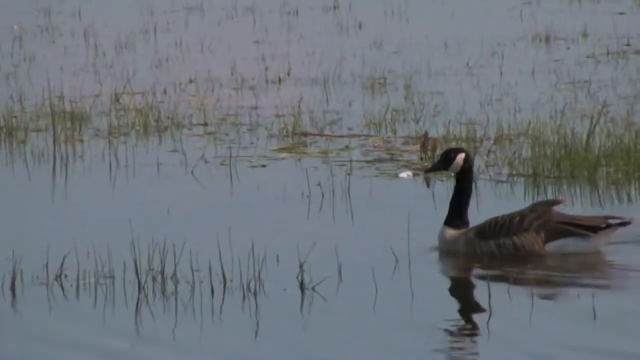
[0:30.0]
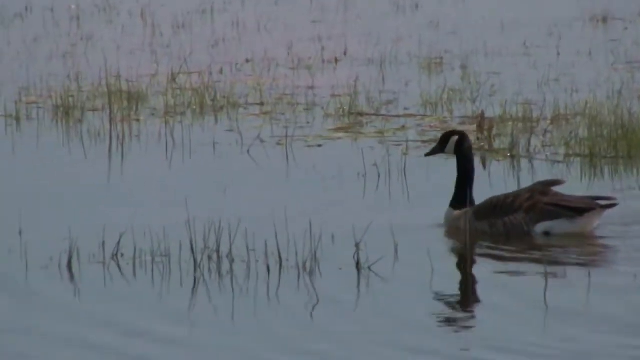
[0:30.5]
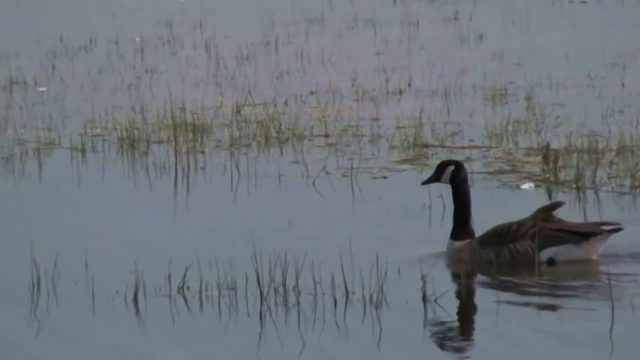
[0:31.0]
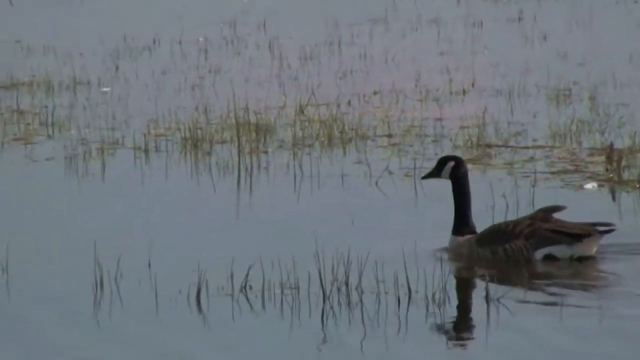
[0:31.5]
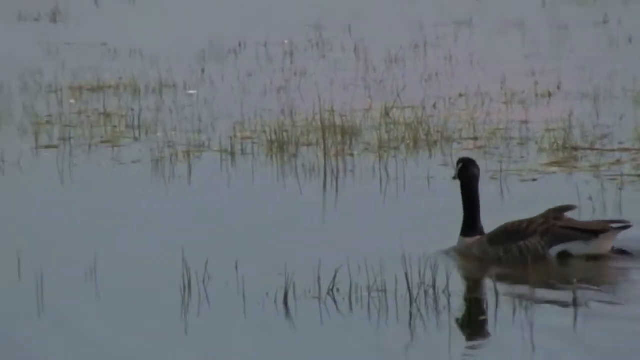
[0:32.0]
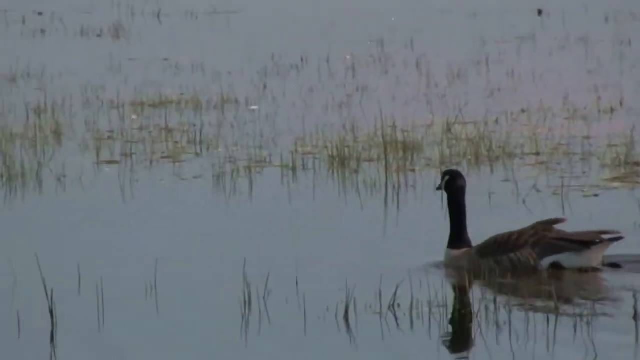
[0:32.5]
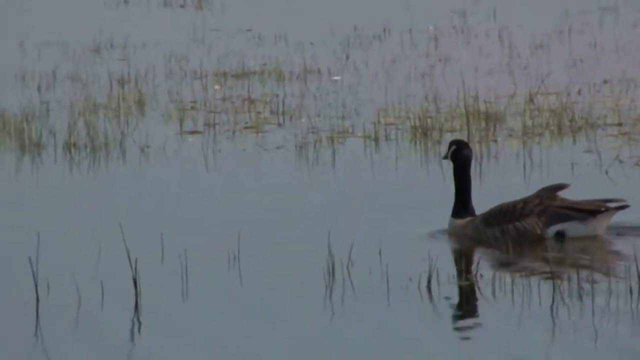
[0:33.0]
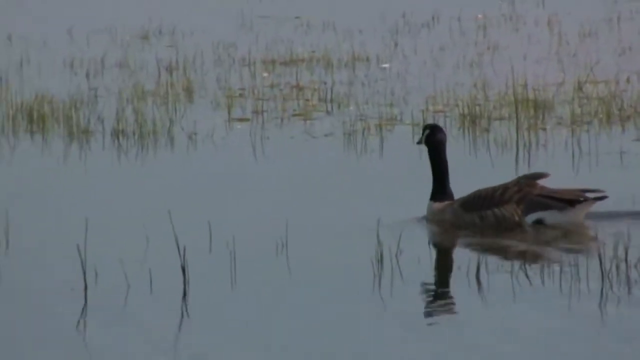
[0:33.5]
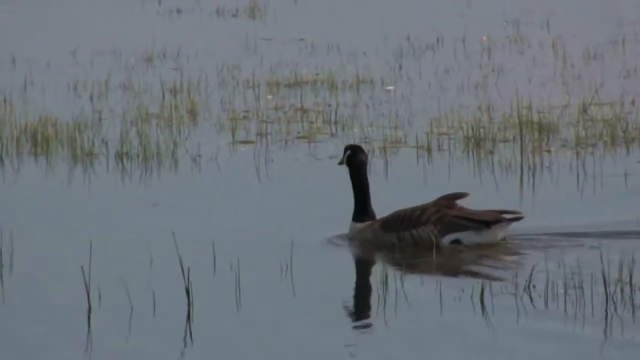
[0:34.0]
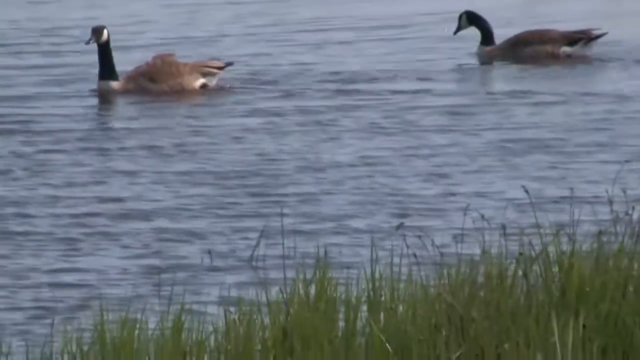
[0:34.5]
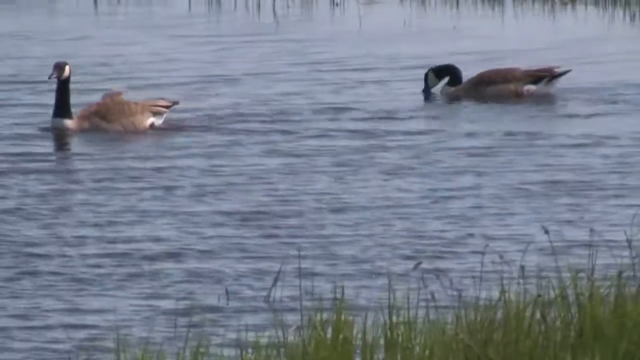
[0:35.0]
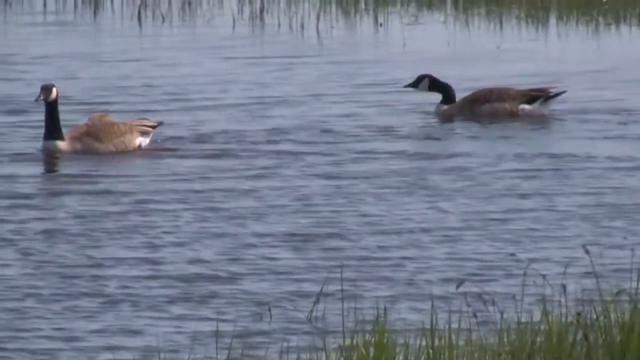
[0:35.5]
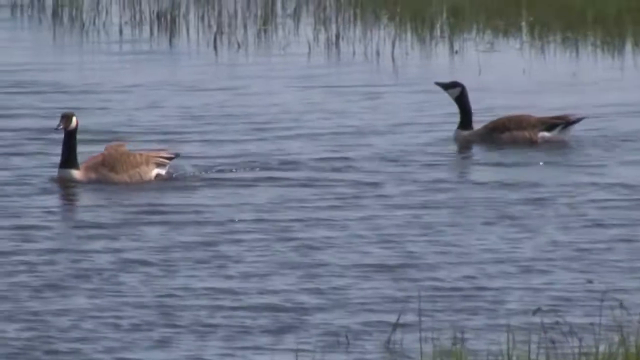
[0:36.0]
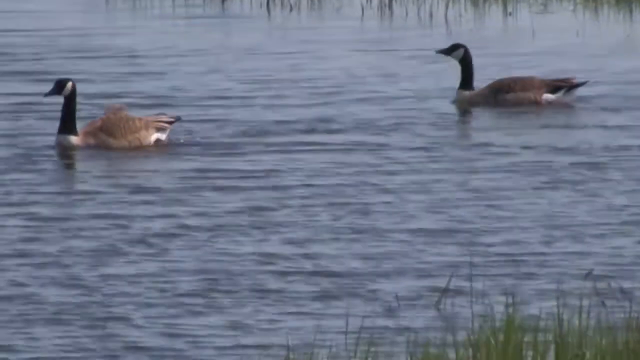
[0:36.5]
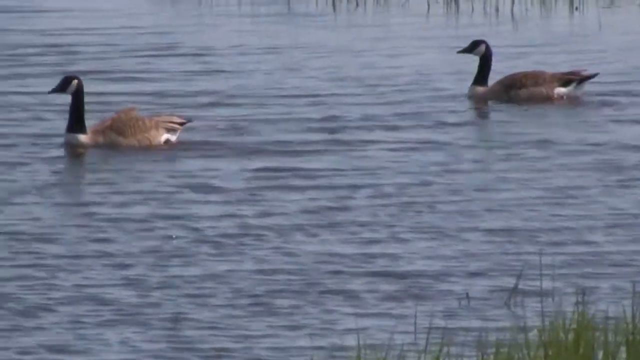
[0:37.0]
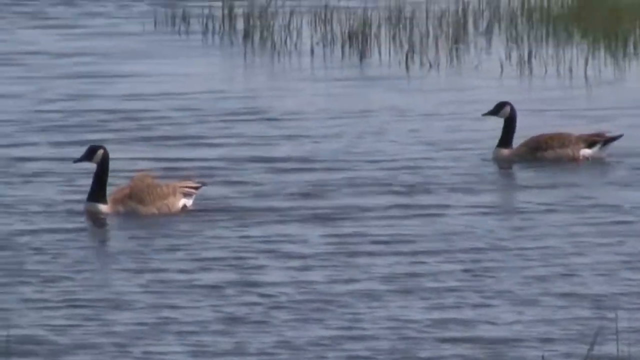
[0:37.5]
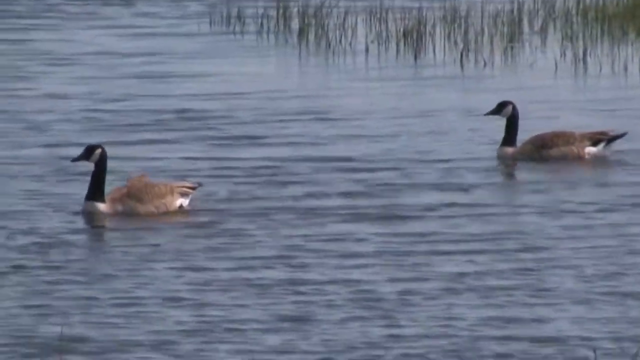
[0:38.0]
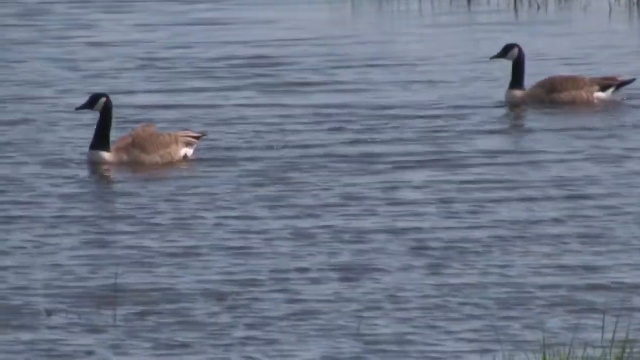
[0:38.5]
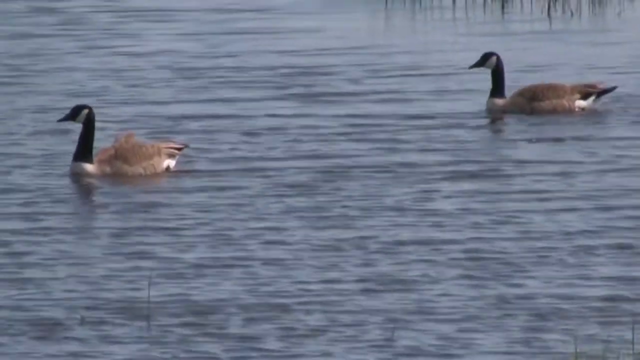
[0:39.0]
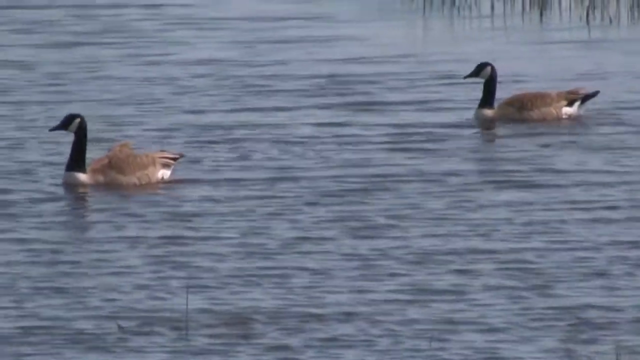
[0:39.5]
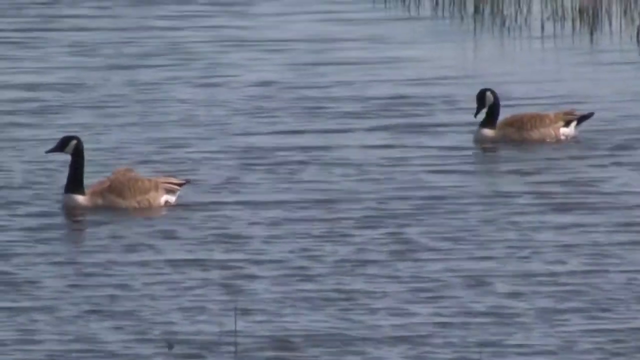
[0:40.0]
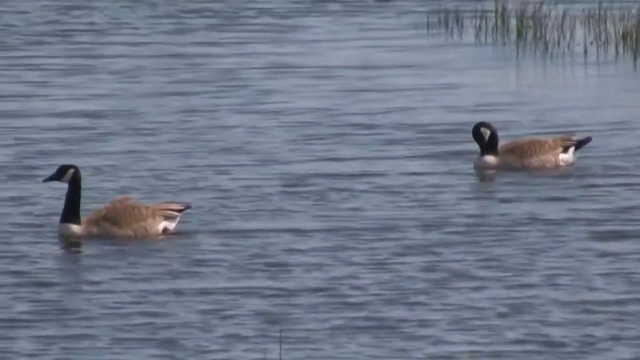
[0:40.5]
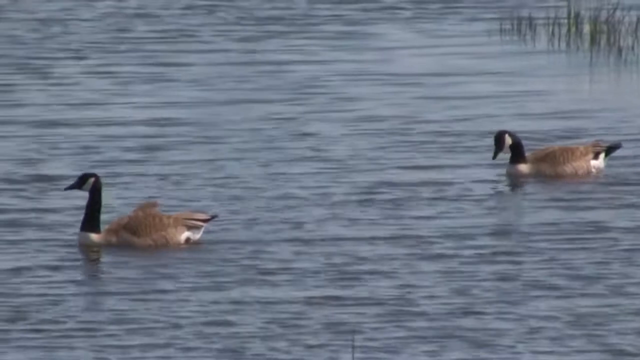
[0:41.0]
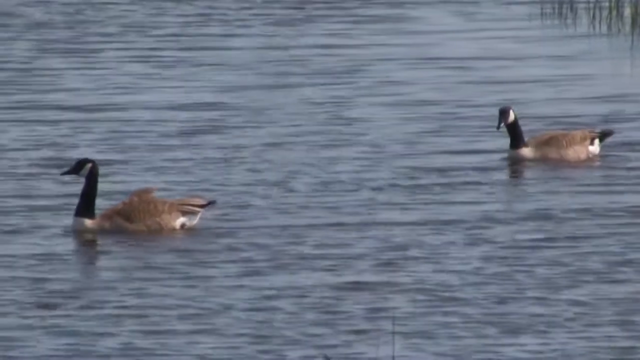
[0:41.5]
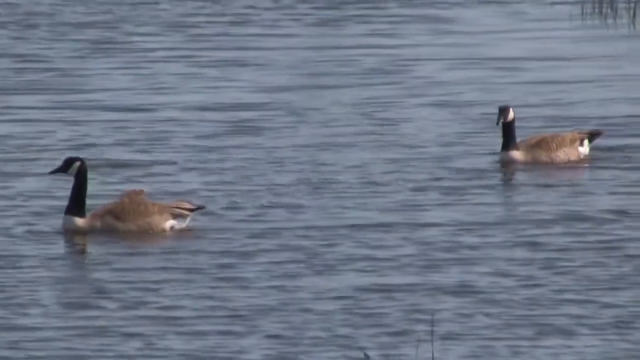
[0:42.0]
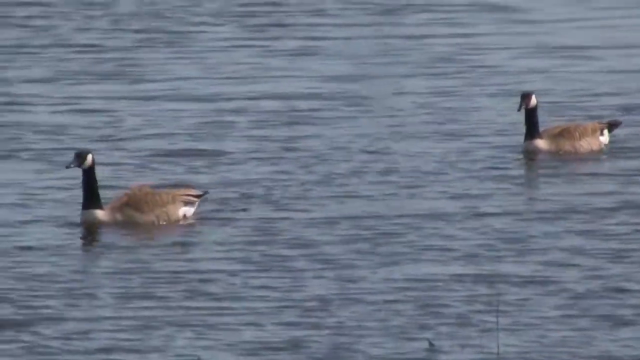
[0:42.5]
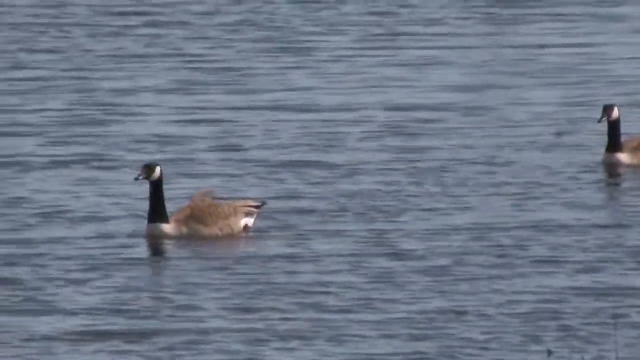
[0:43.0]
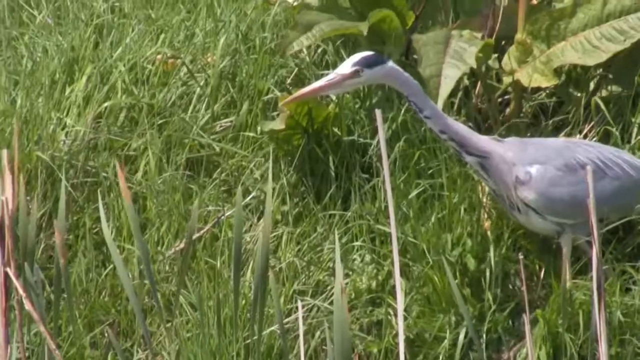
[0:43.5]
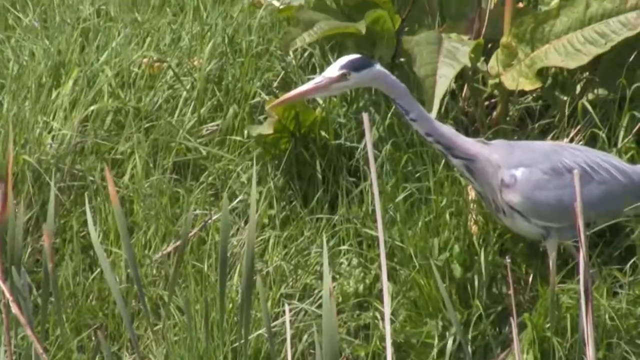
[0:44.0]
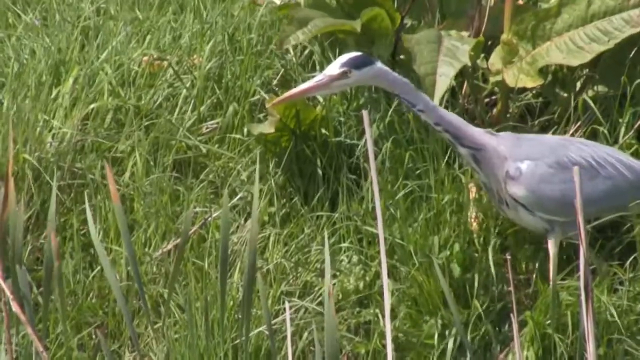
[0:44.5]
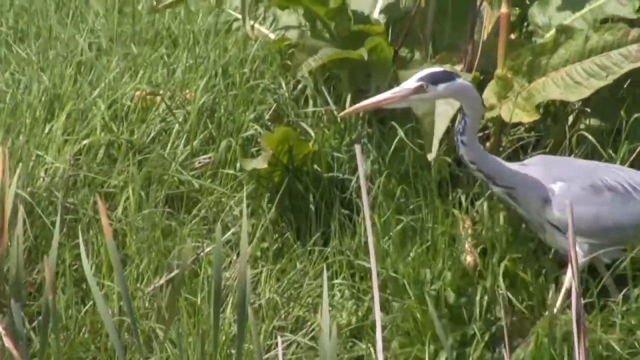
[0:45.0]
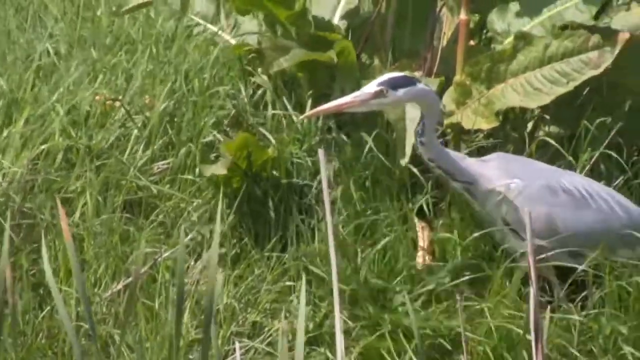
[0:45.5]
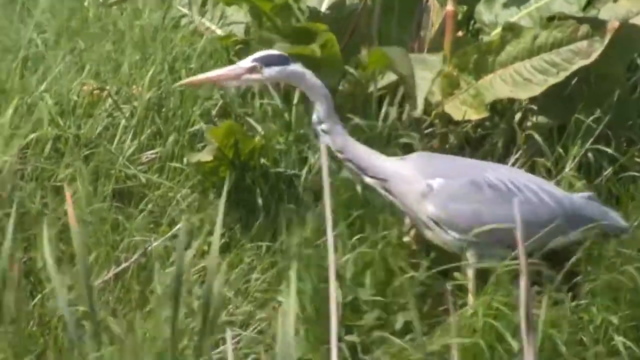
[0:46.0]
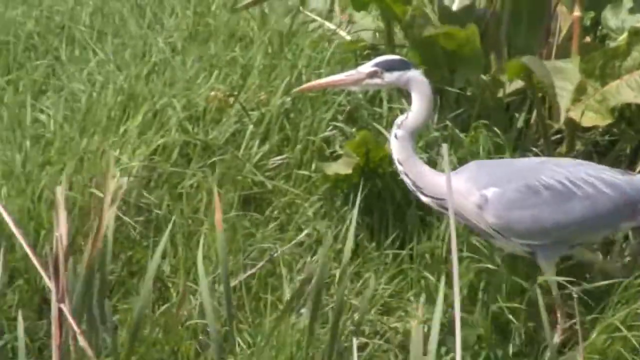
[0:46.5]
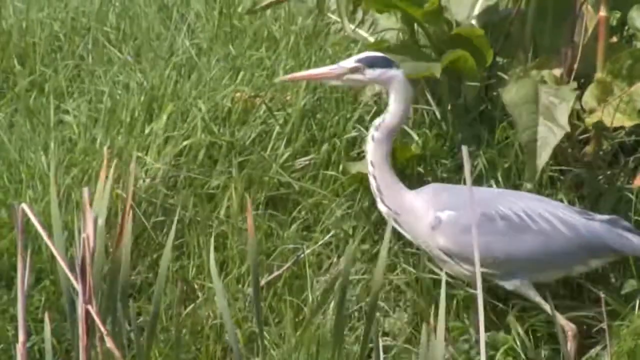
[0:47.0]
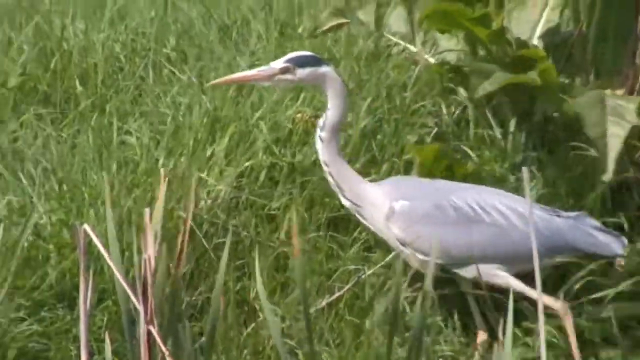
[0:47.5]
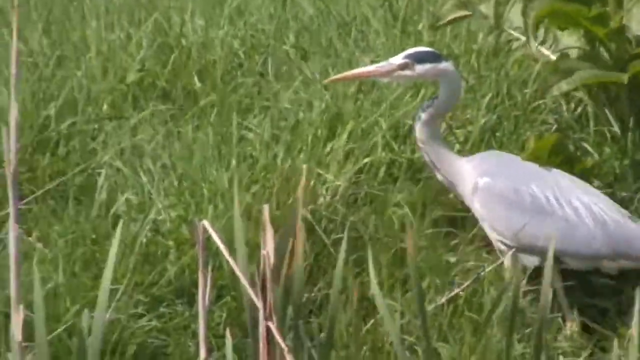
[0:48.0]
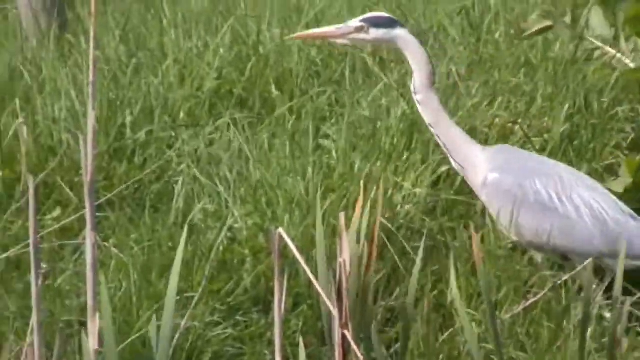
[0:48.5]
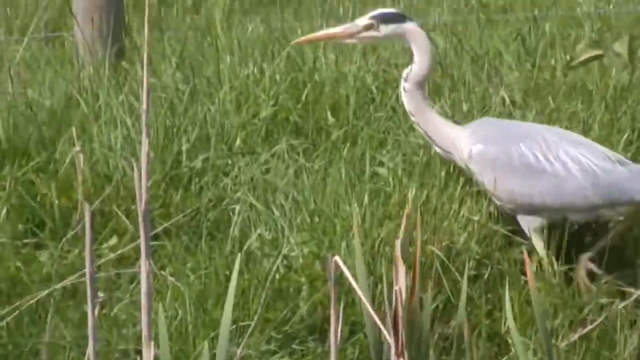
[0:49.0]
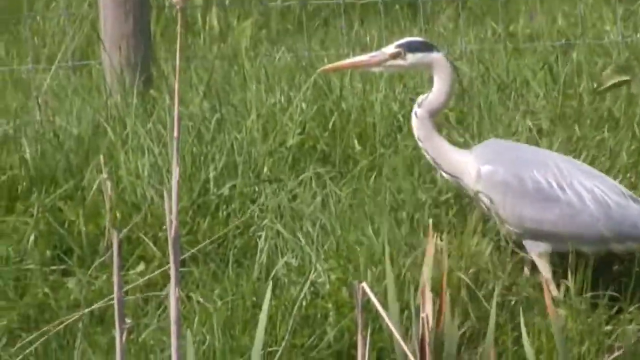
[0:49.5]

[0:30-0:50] A duck swims through water, with small green reeds showing above the surface. The duck has brown feathers on its body, some white feathers before its neck, and a mostly black neck with more white feathers before its eye. It moves slowly from the right to the left of the screen, and the water is barely moving. A different shot then shows two ducks in the same water. They look exactly alike, with a little more white on their bodies, and both swim to the left of the screen as well. Occasionally they stop and bustle their feathers with their beaks to clean themselves. The scene suddenly changes to a crane, the bird. It is mostly grey, with very long legs, a yellowish beak, a whitish head and a little black. The surroundings are very lush, with lots of tall grass, a tree in the background and some large green leaves. The crane moves to the left of the screen, moving its head and neck as it goes and moving its long legs slowly.